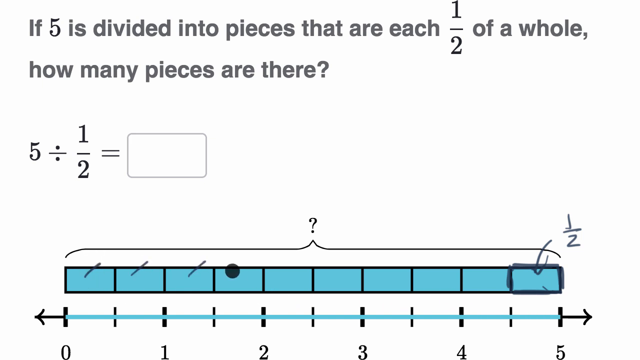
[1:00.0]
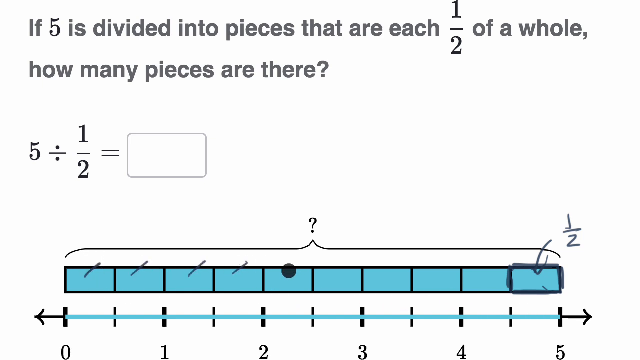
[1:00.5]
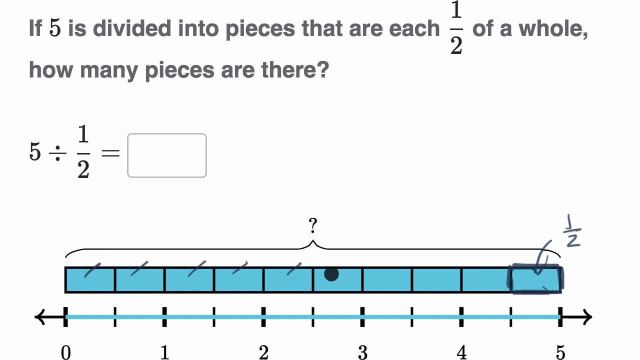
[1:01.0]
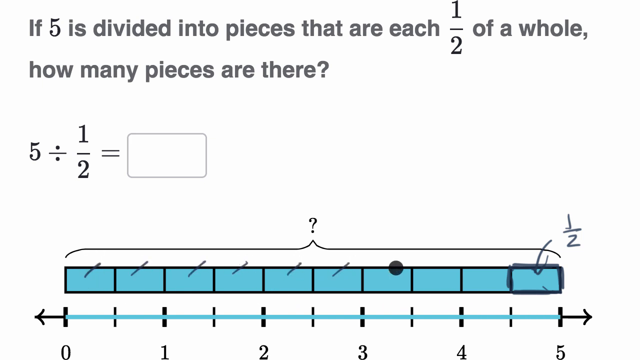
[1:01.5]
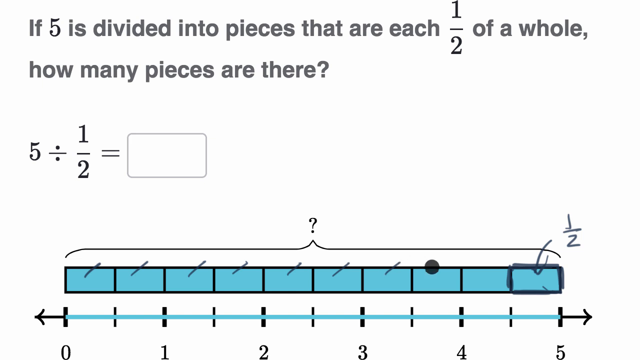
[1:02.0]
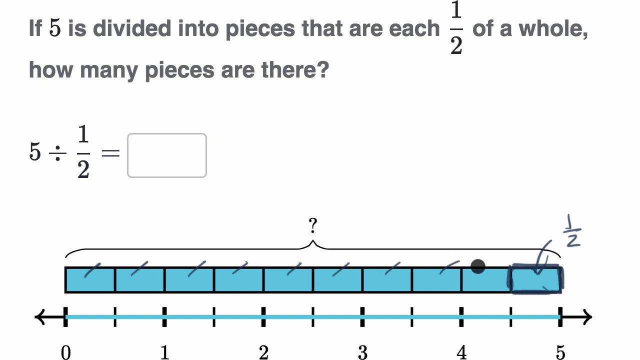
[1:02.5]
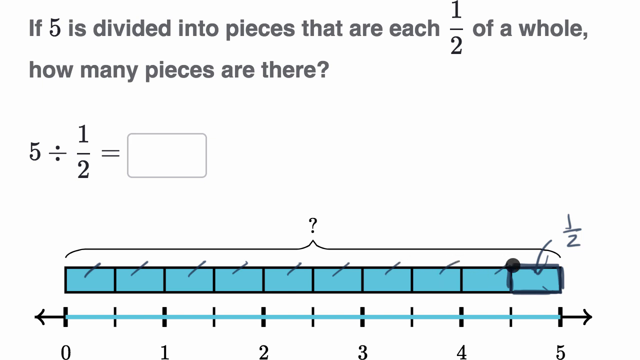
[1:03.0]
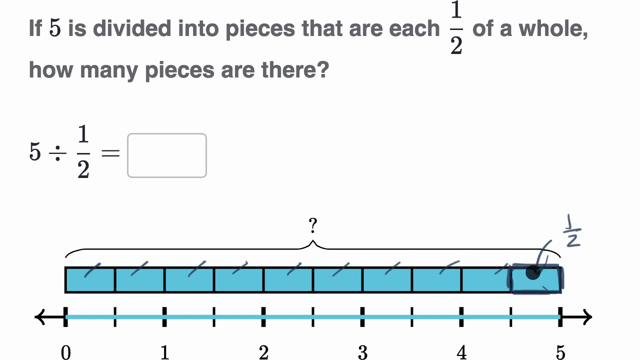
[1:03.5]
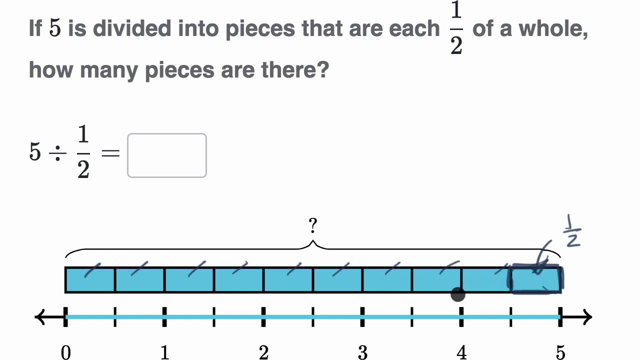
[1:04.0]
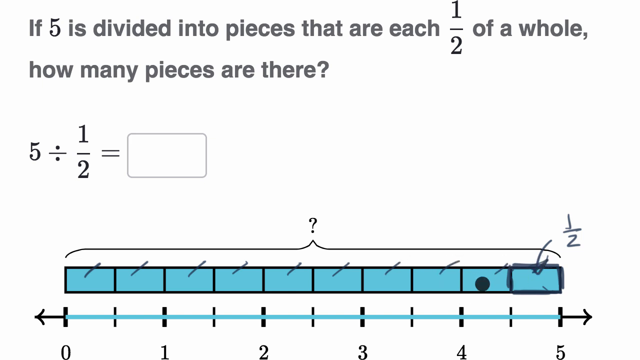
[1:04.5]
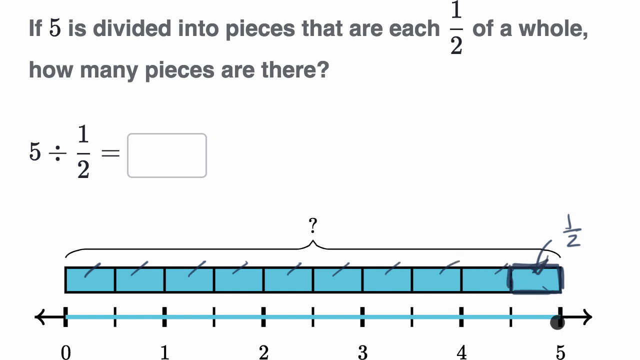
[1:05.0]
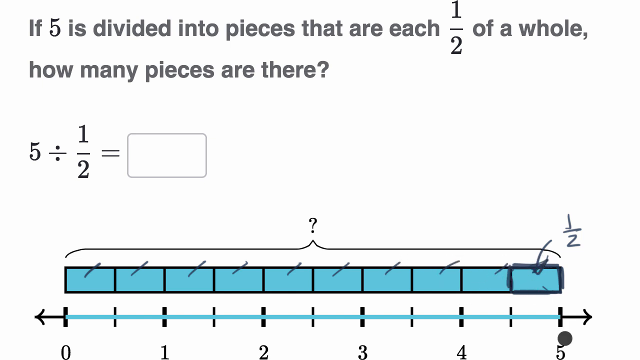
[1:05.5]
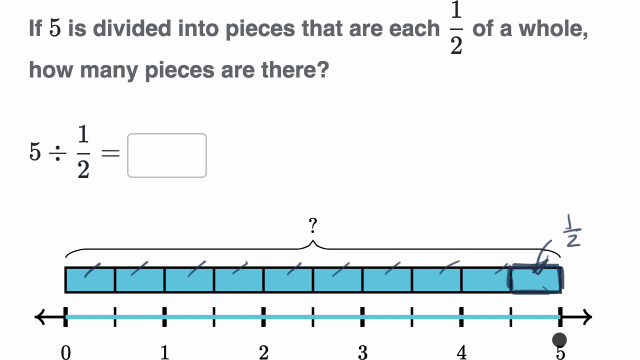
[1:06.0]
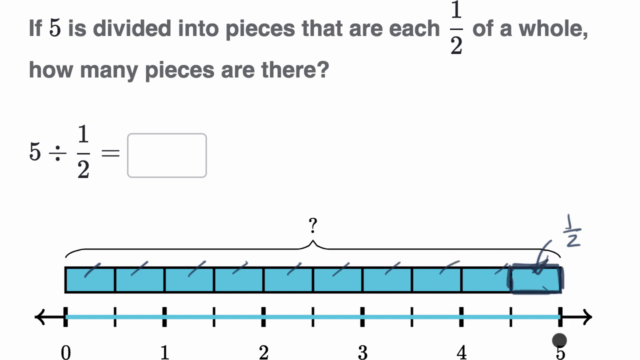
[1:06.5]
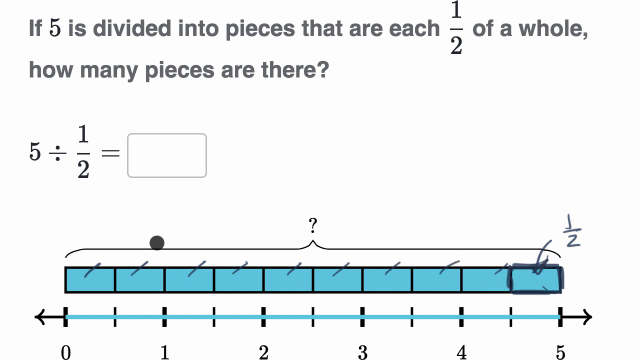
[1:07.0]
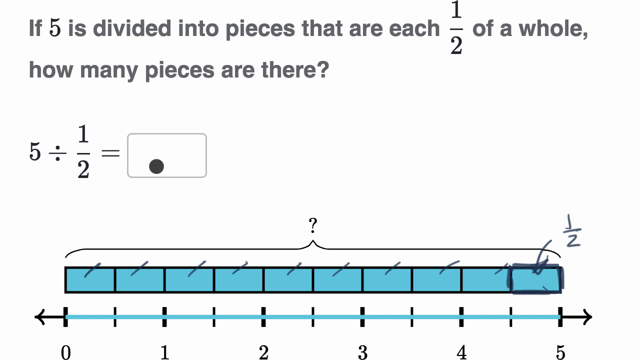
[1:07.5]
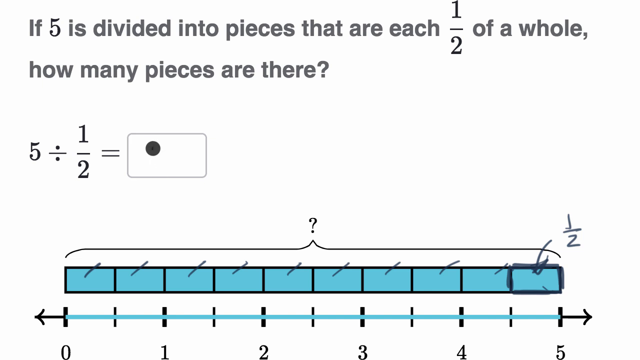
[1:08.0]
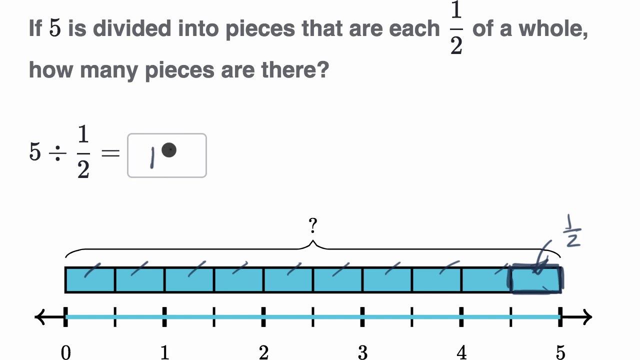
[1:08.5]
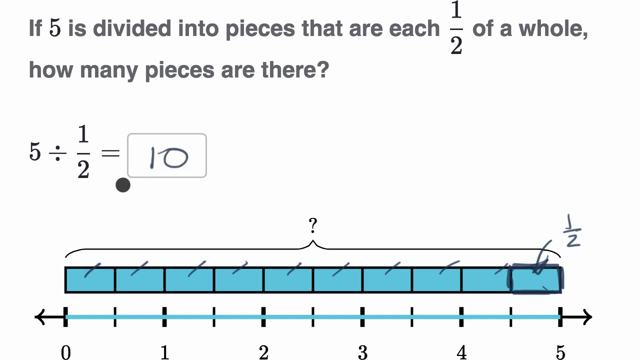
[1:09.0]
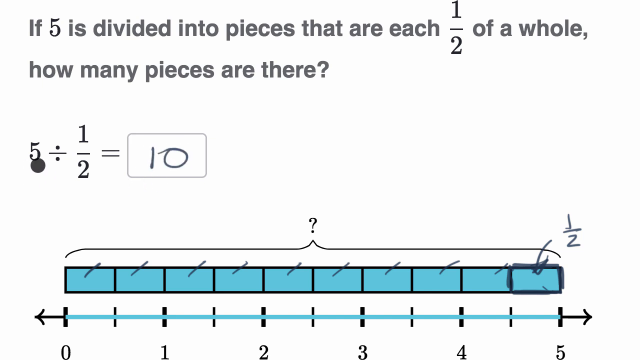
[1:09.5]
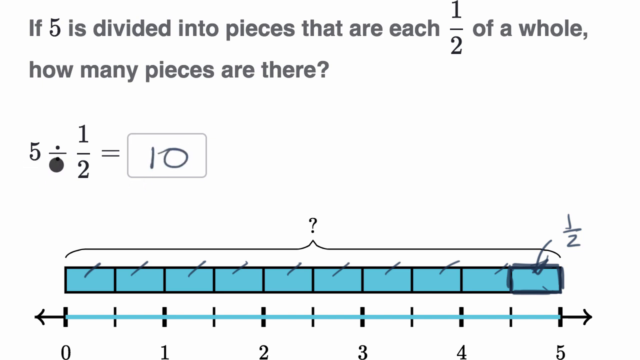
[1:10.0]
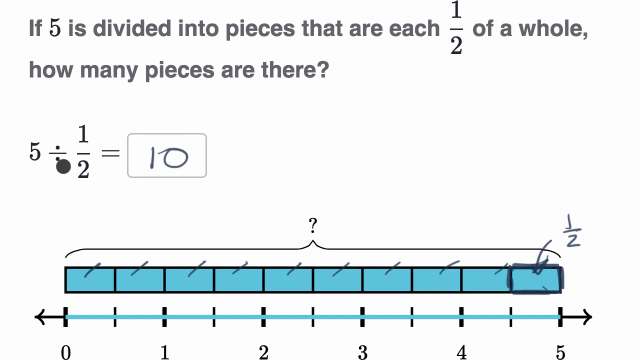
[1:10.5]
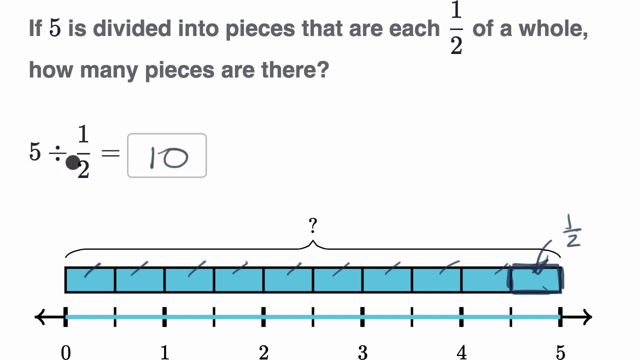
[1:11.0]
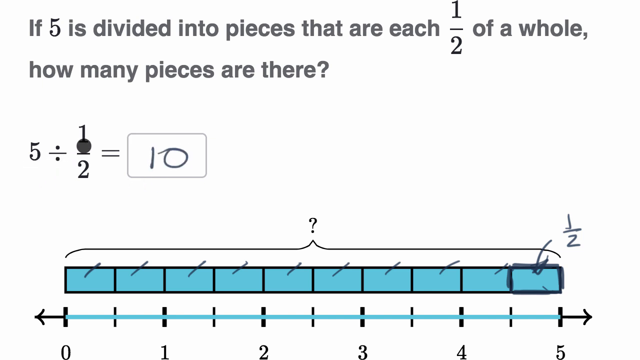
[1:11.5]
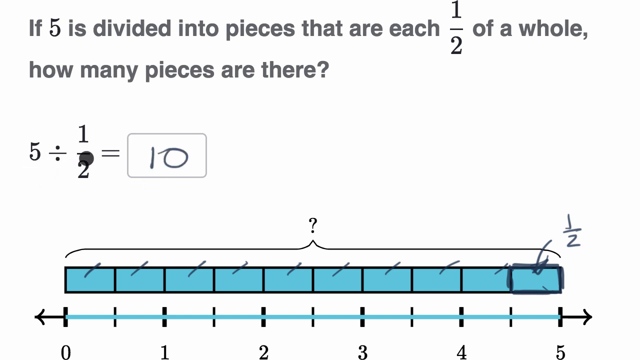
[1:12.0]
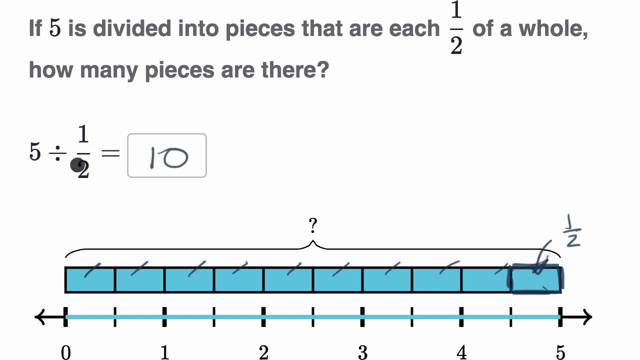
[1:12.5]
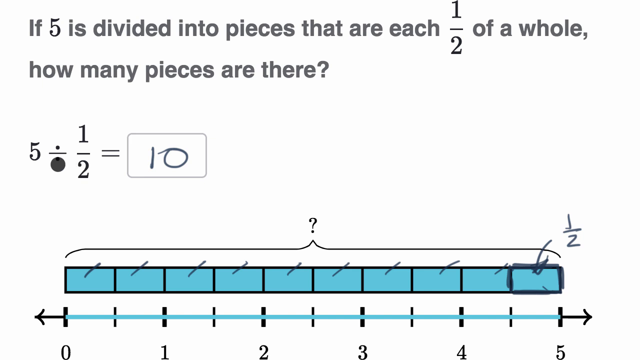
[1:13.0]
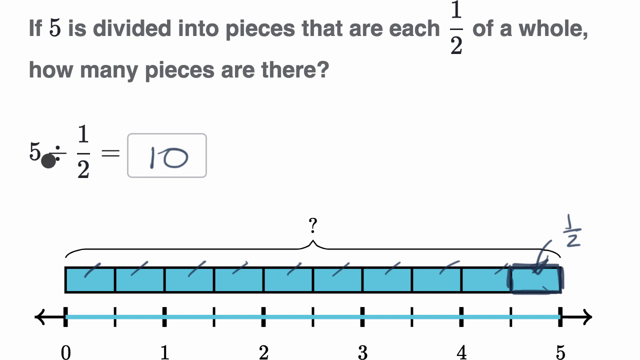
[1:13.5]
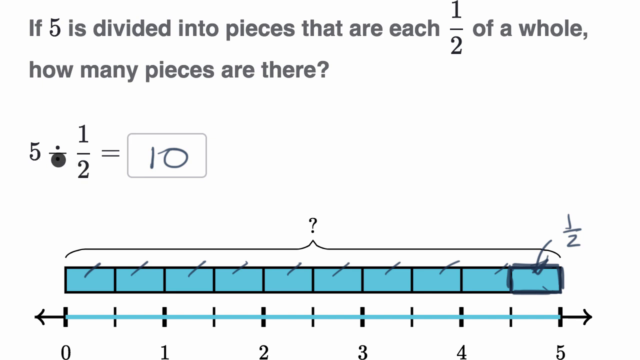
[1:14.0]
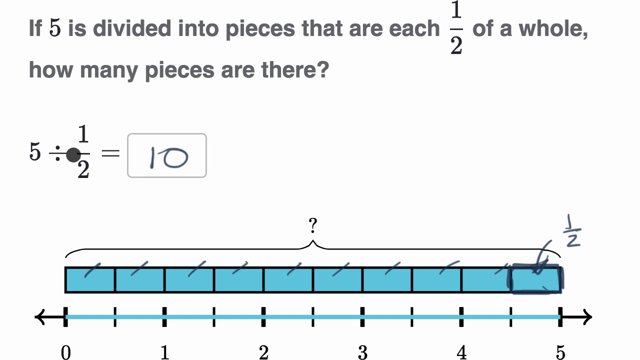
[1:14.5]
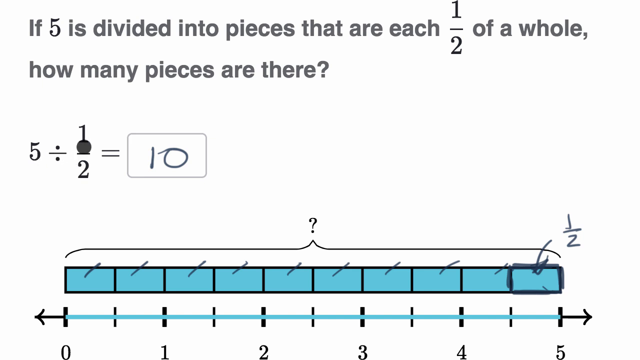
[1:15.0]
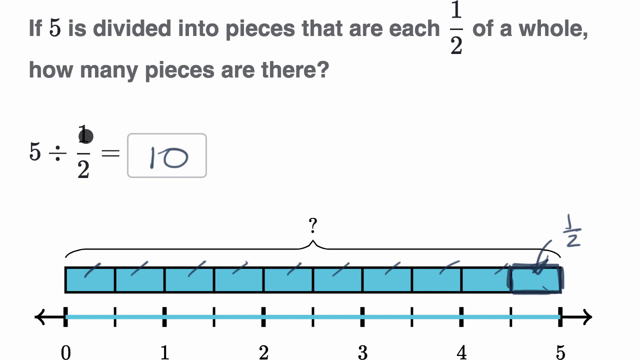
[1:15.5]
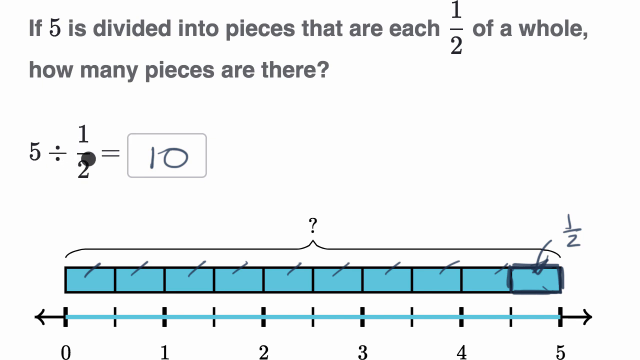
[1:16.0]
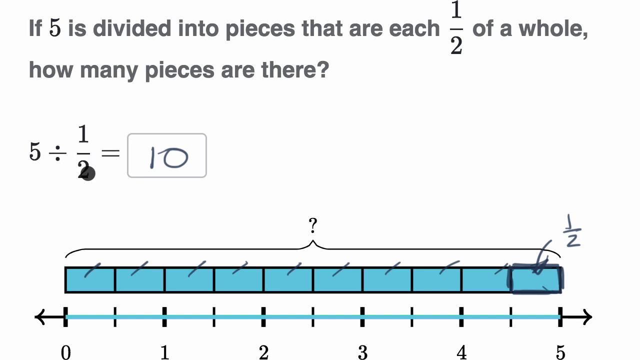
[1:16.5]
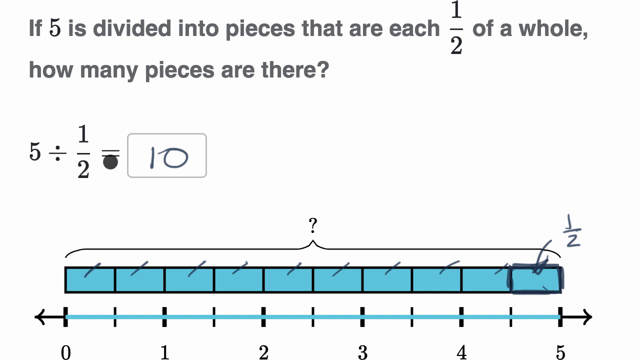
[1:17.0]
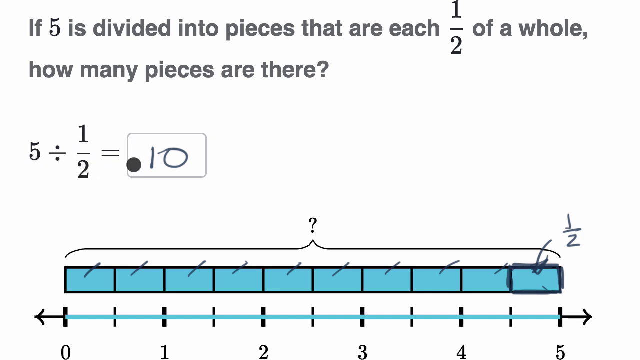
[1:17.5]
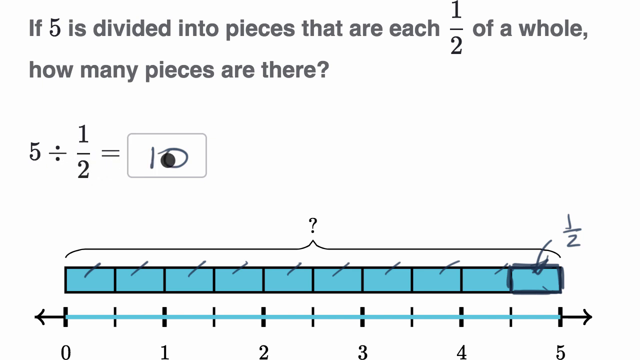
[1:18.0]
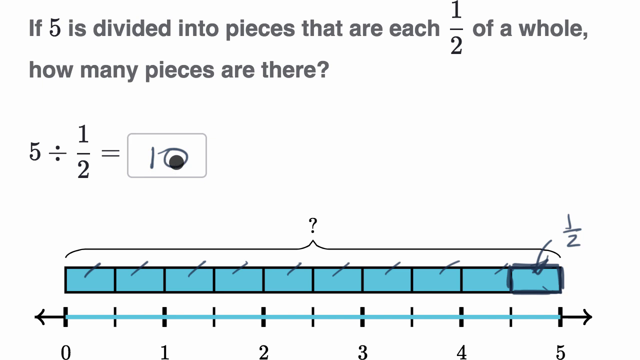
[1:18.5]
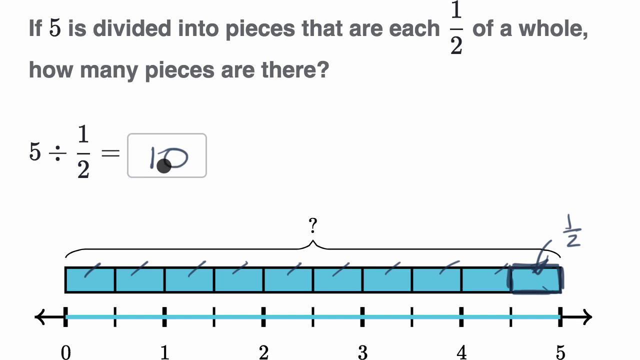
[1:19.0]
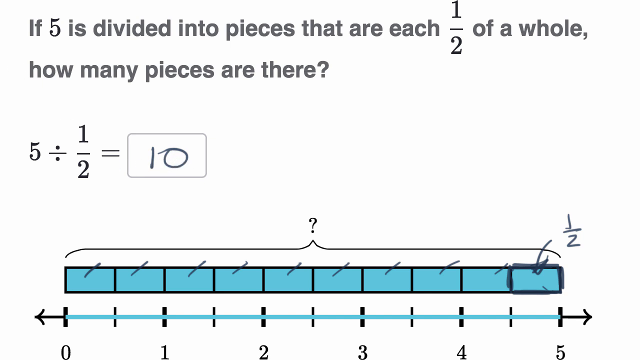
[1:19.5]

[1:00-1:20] The white background shows gray text at the top, an equation to the left of an empty text box in the middle, and a blue bar and a blue graph at the bottom. All four walls of the blue bar's rightmost section are highlighted in gray, with a drawn arrow pointing down into it and 1/2 drawn above and to the right. The gray circular cursor moves right through the sections of the blue bar, making a mark pointing up and to the right in each section. After finishing with the rightmost section, the cursor moves down and to the left, then is dragged down and to the right to hover over the 5 beneath the graph. It is brought up and to the left to hover over the empty text entry box and draws the number 10 in it before moving left. The cursor hovers over the text "5 ÷ by 1/2", then over the 10 in the entry box, then moves right and left furiously over the entry box and the number 10.